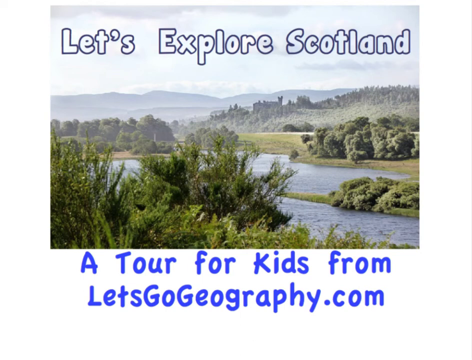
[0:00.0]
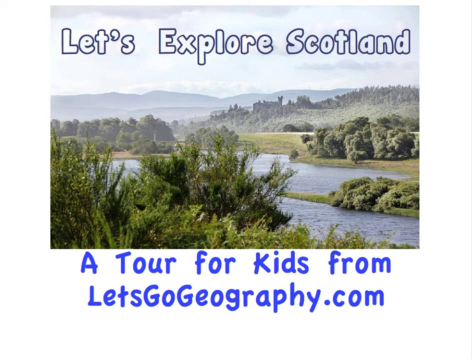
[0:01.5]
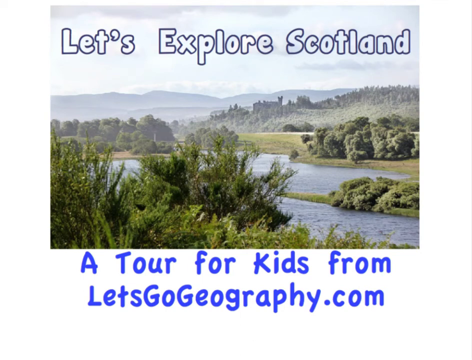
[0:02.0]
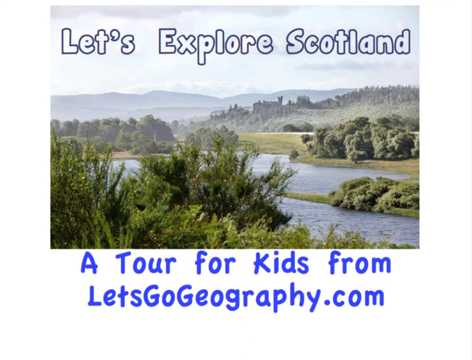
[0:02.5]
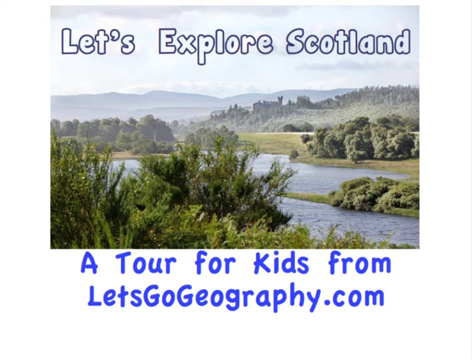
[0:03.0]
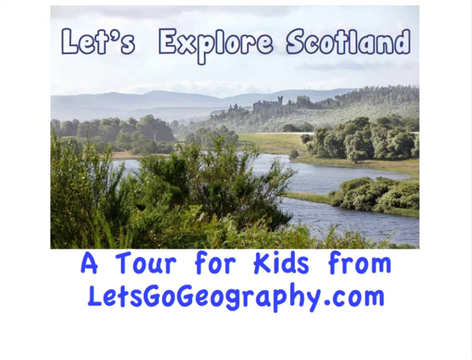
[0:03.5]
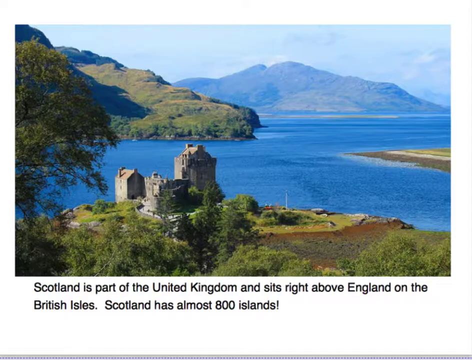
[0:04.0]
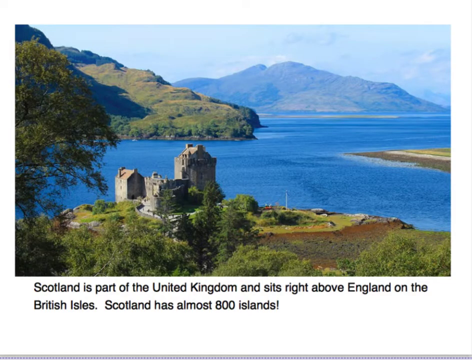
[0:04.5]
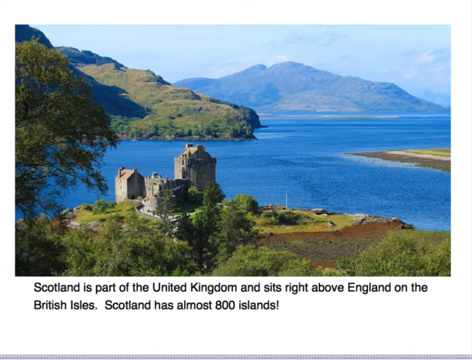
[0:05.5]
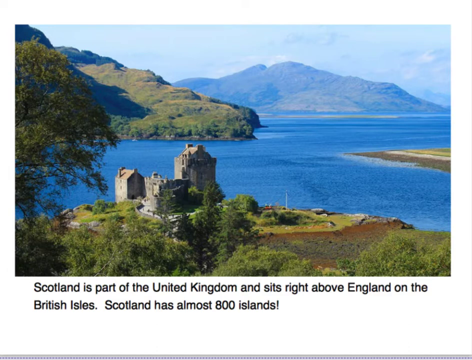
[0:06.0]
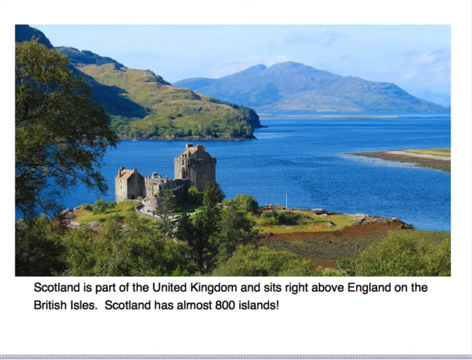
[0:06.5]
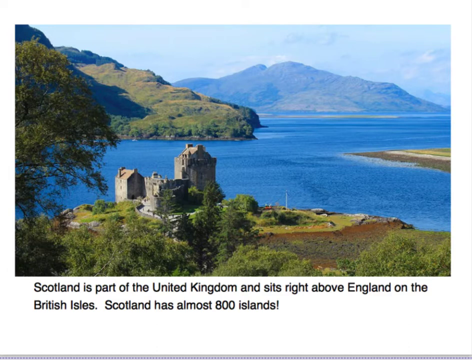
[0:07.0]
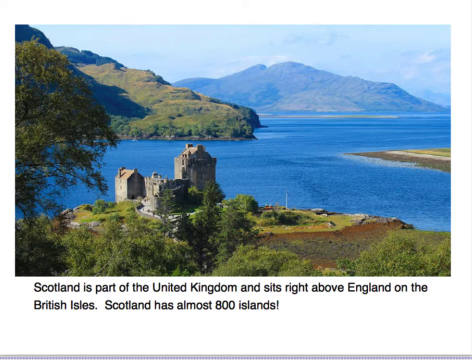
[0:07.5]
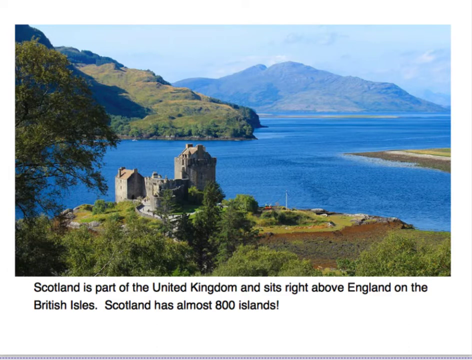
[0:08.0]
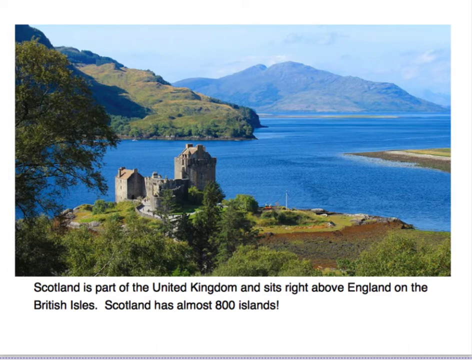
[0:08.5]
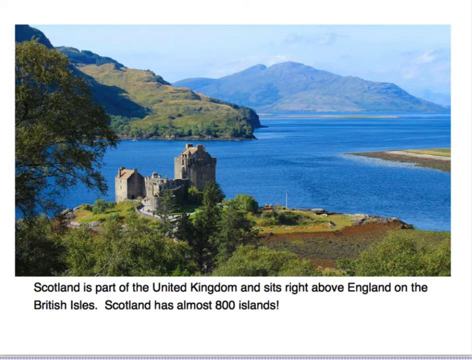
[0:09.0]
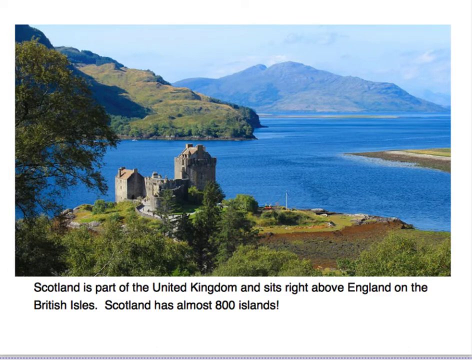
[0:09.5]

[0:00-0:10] A slideshow opens with "Let's Explore Scotland" at the top and "A Tour for Kids from letsgogeography.com" at the bottom, over a picture that looks like a lake in Scotland. The next slide shows another picture of a lake and mountain in Scotland, with text at the bottom: "Scotland is part of the United Kingdom and sits right above England on the British Isles. Scotland has almost 800 islands." This picture has a mountainous scene in the background, a vast body of water, and some tall castle-like buildings in the forefront.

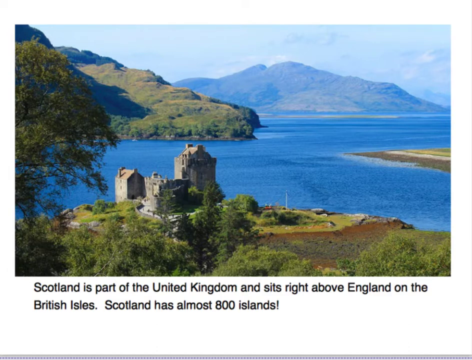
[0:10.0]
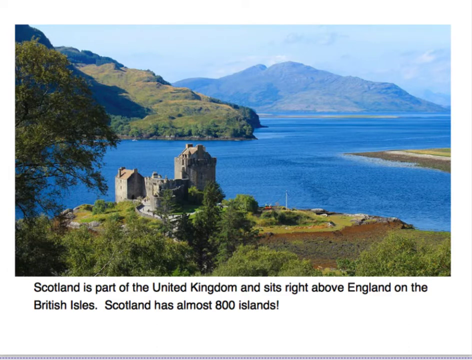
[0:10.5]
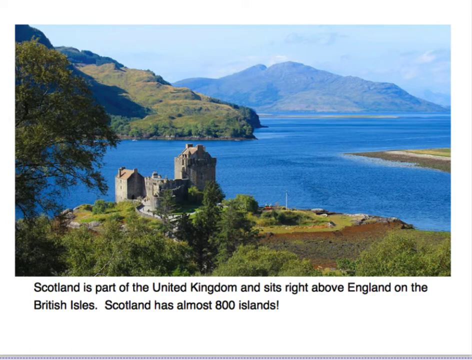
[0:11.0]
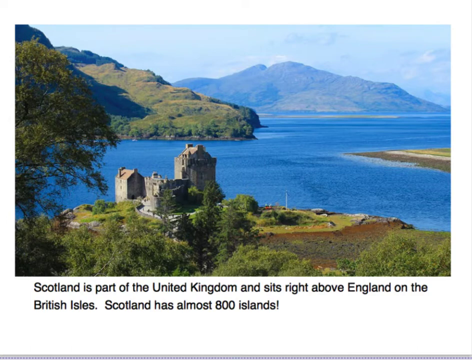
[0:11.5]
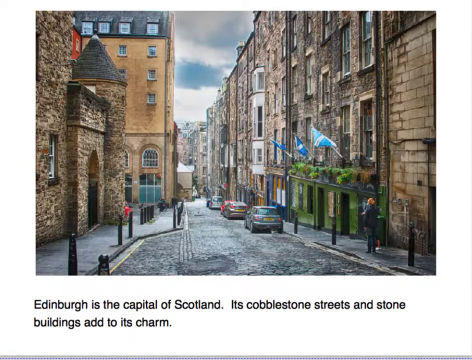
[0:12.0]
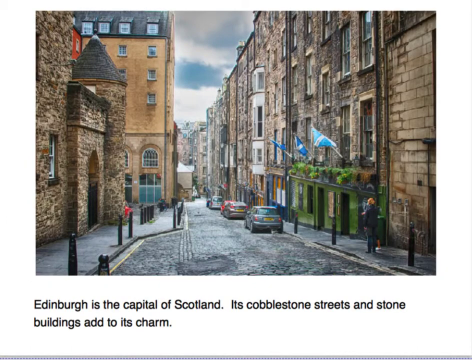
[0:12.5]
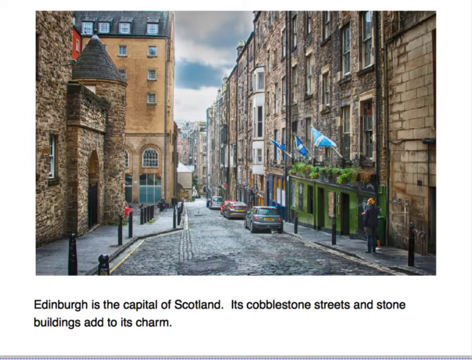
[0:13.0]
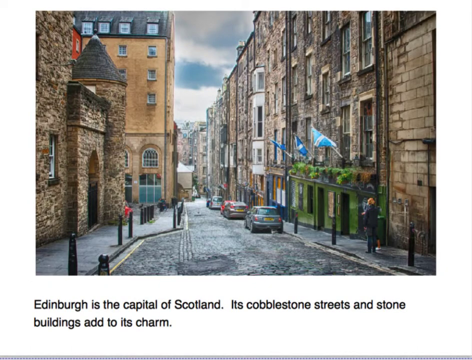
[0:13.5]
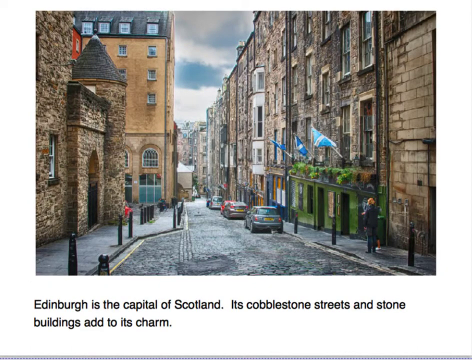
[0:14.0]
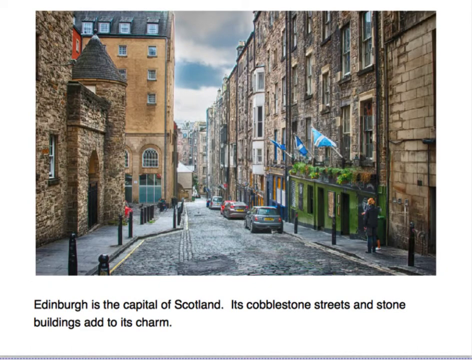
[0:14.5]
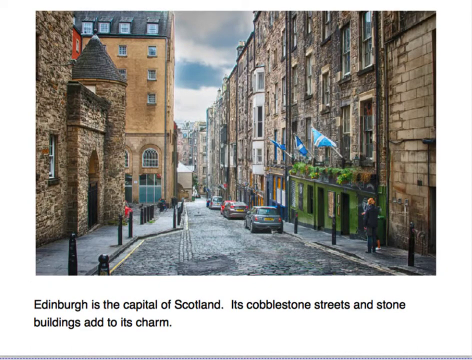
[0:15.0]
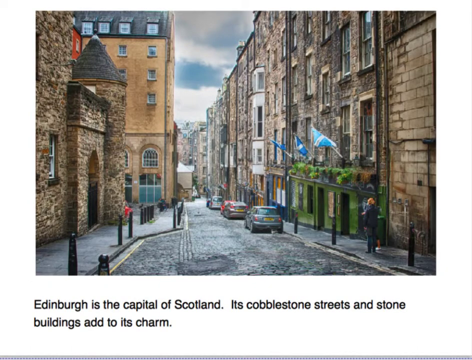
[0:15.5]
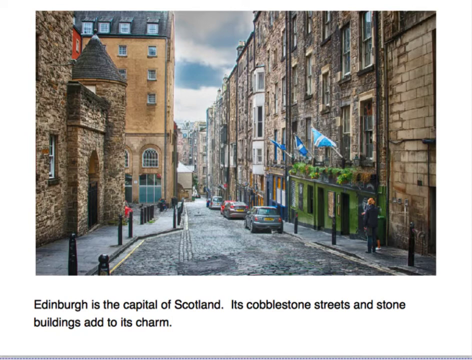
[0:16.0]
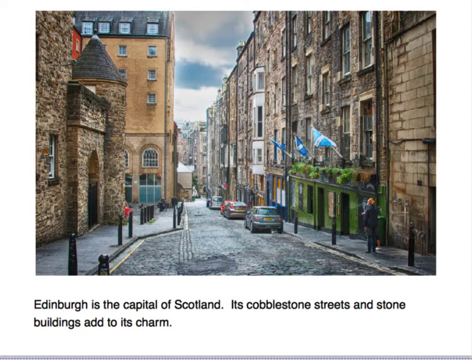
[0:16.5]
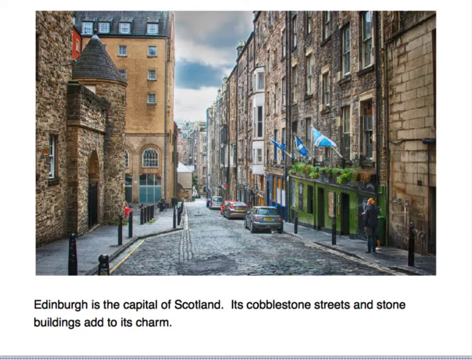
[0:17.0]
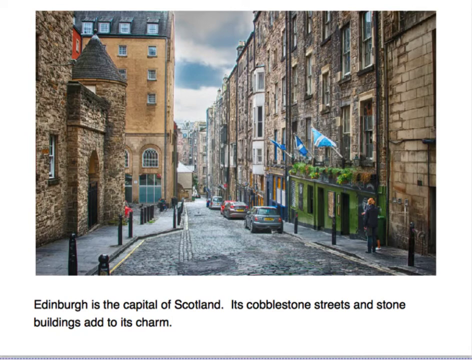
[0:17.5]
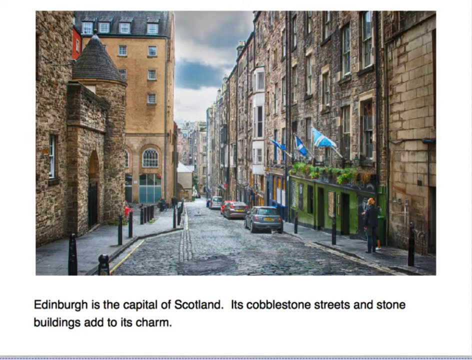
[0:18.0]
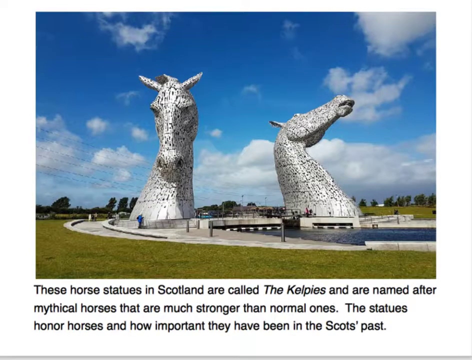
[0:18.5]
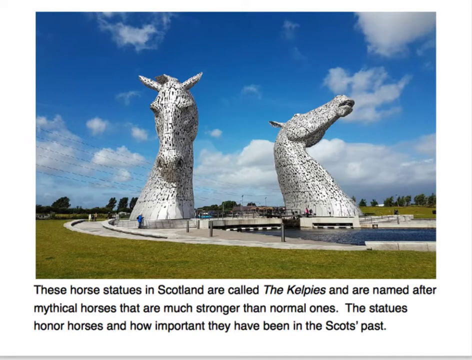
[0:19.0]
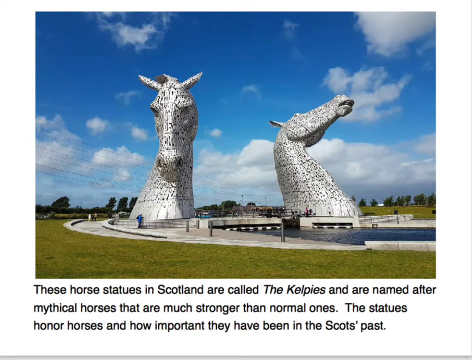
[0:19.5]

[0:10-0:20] The next slide shows a city scene that looks like it was taken walking down the main road of a city street in Scotland. On both the left and right sides are buildings made of stone, wood and brick. The buildings are very tall, about four or five stories high, with square, rectangular and round windows along all of them. The street is thin, narrow and made of cobblestone. A few cars are parked on the side of the street, and a couple of people are walking on the sidewalk. The text at the bottom says, "Edinburgh is the capital of Scotland. Its cobblestone streets and stone buildings add to its charm."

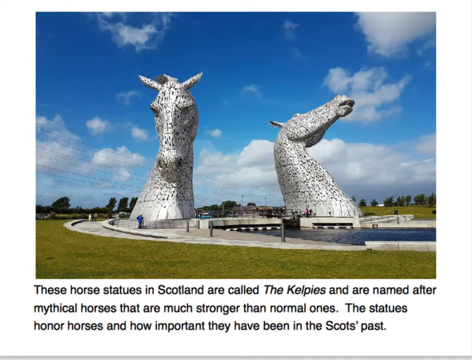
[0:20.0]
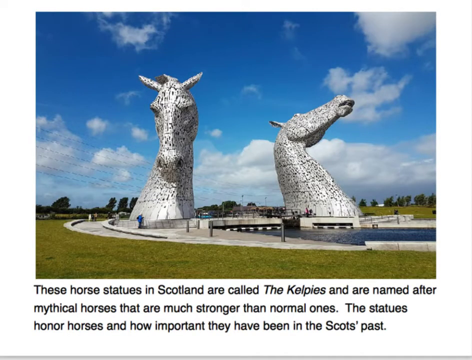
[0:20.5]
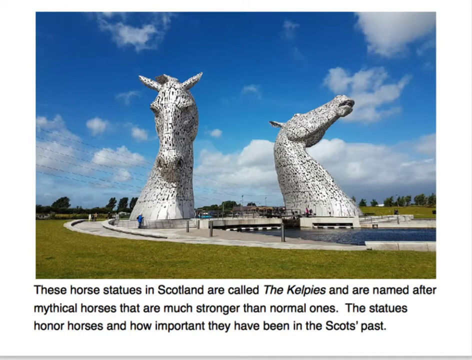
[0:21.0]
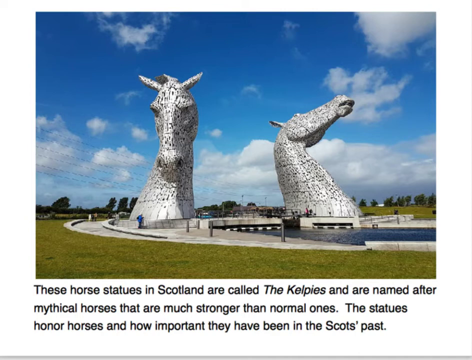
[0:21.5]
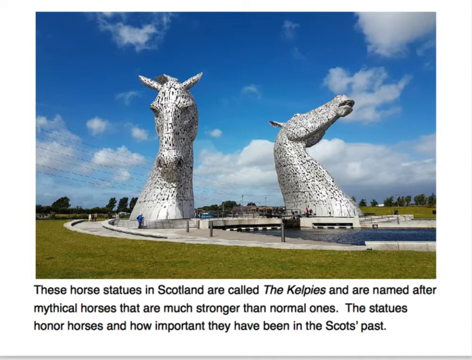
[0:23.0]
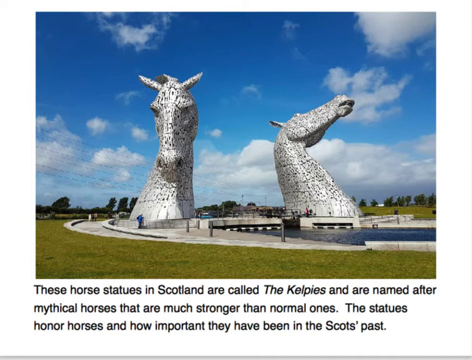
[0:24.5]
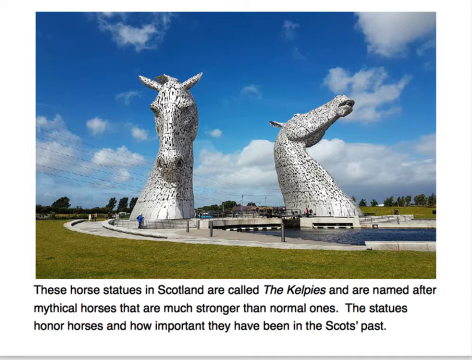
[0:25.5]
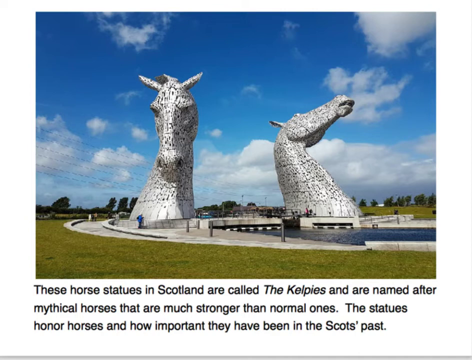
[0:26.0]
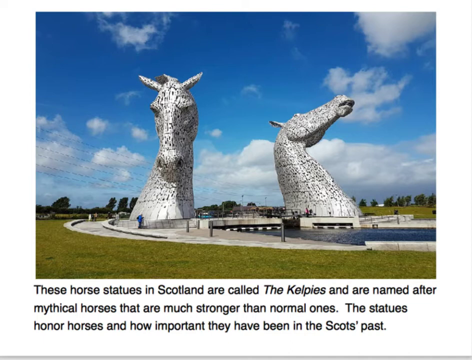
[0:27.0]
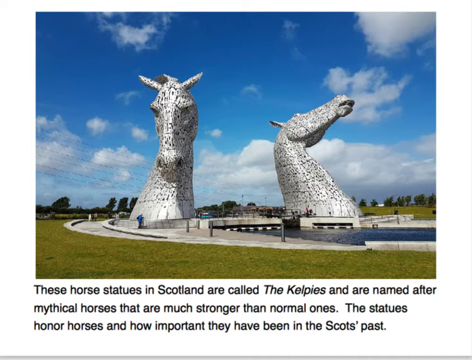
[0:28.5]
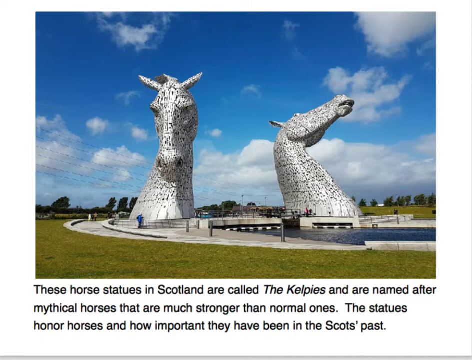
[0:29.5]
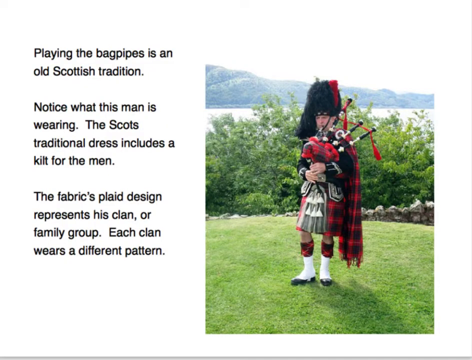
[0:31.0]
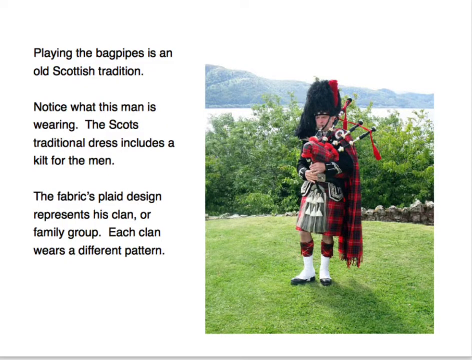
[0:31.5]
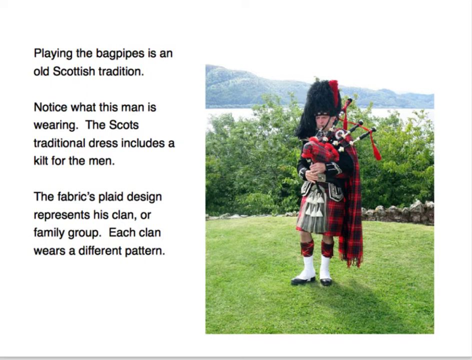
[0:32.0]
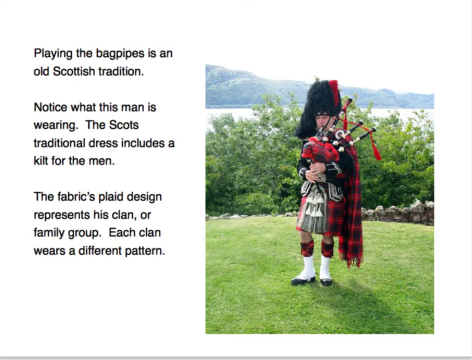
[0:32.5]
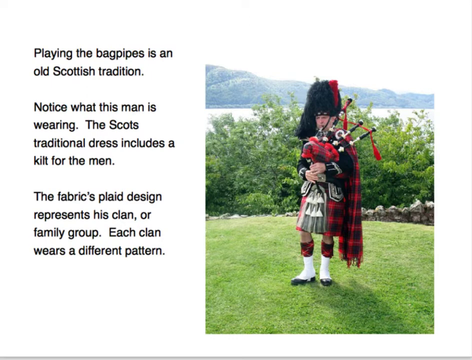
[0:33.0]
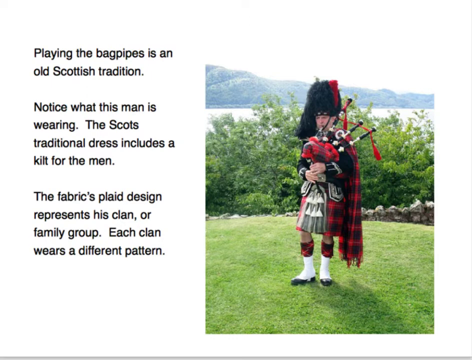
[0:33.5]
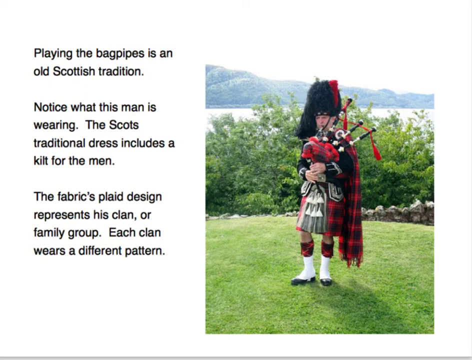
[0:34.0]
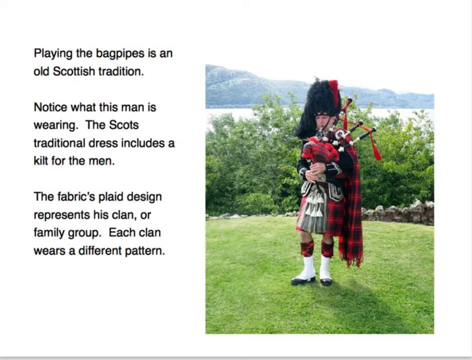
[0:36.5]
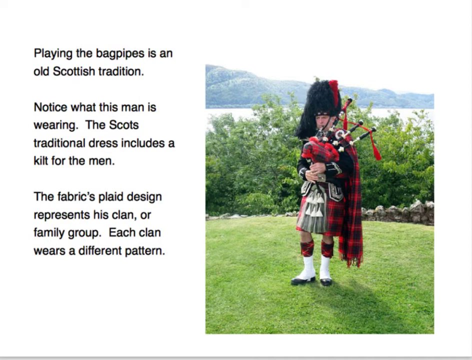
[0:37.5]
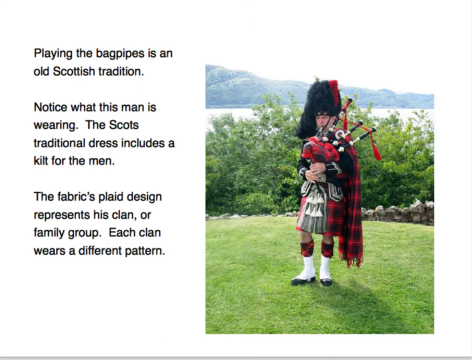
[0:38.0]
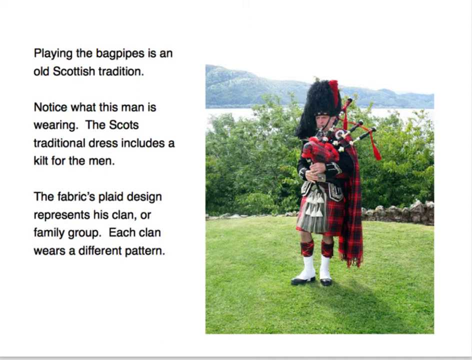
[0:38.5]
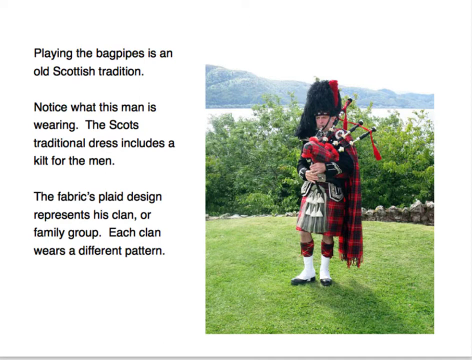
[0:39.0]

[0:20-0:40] Two very large horse statues, the Kelpies, appear. They are gray with what appear to be black dots on them. They are on top of a pond or body of water, with a walking path going around the statues. In the distance there appears to be at least one person standing in front of the statues. In the background are a blue sky with lots of clouds, power lines, and trees in the distance. The text at the bottom reads, "These horse statues in Scotland are called the Kelpies and are named after mythical horses that are much stronger than normal ones. The statues honor horses and how important they have been in the Scots past." The slideshow then moves to an image of a man wearing a kilt.